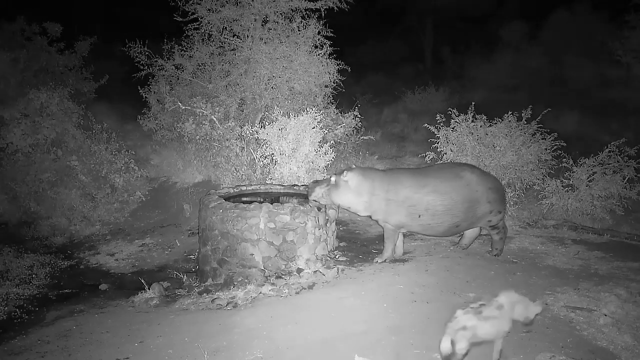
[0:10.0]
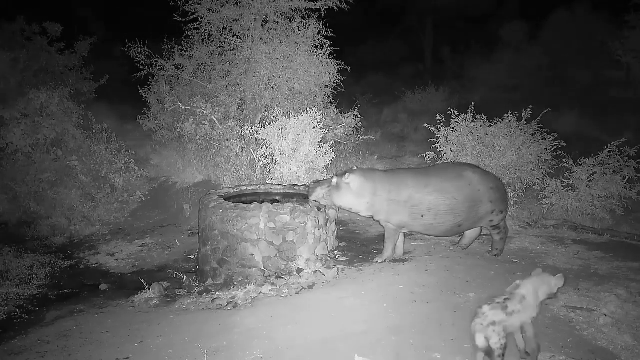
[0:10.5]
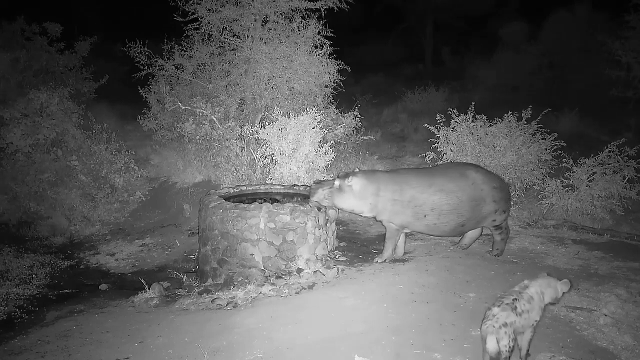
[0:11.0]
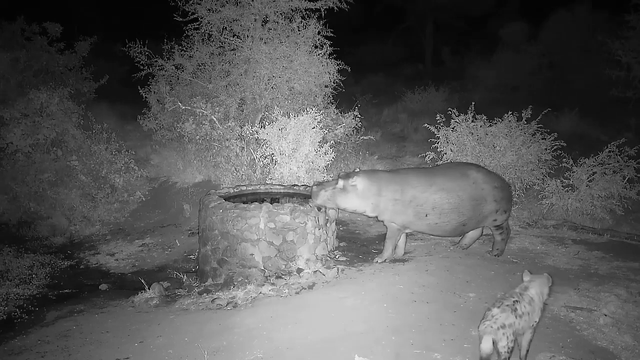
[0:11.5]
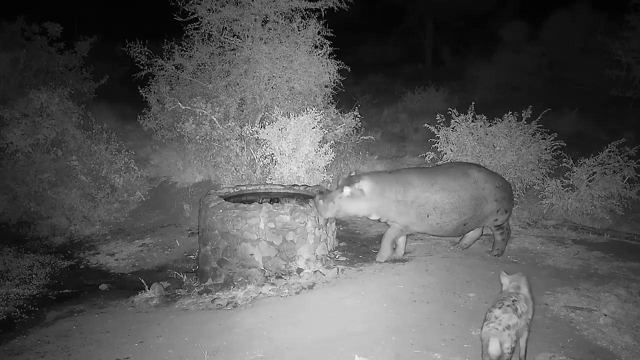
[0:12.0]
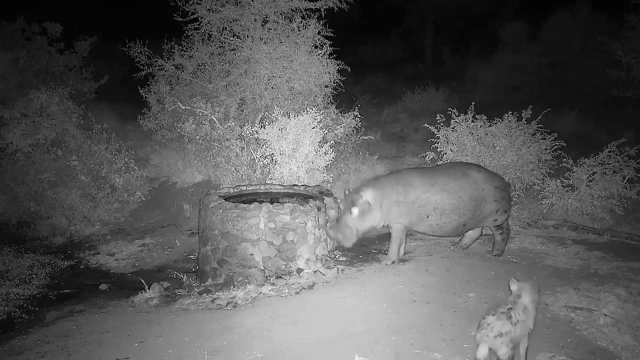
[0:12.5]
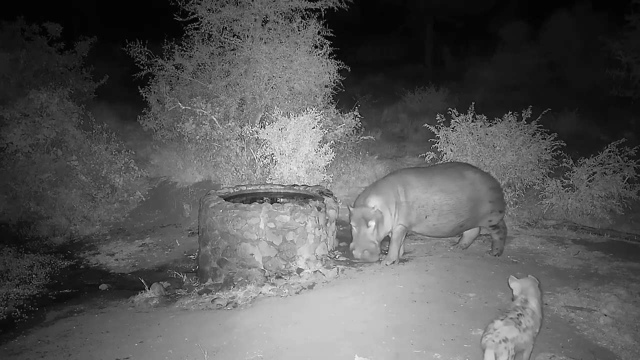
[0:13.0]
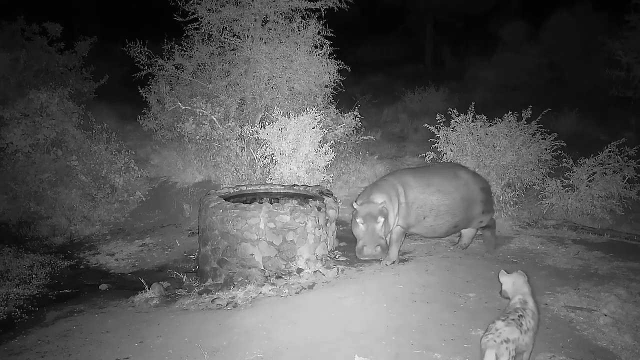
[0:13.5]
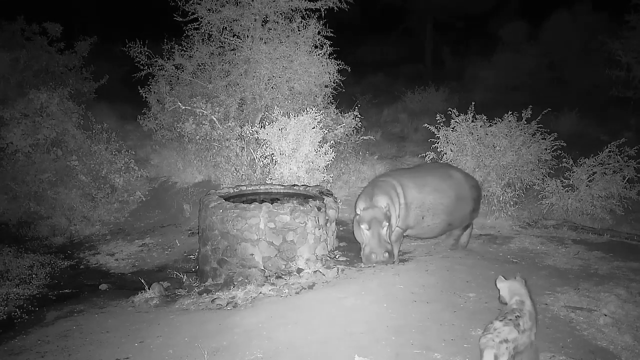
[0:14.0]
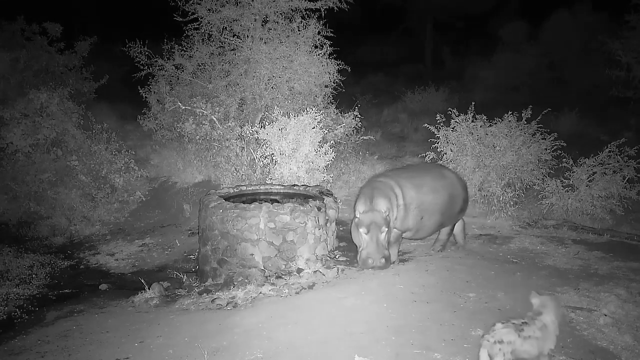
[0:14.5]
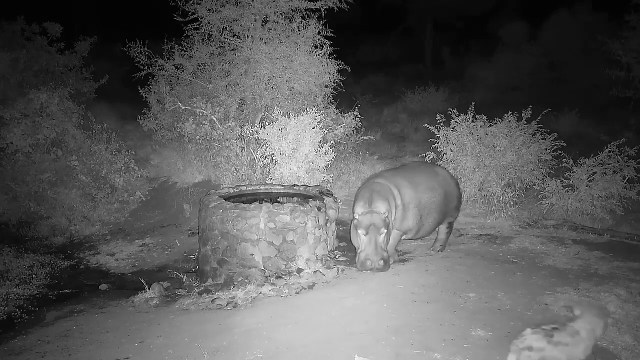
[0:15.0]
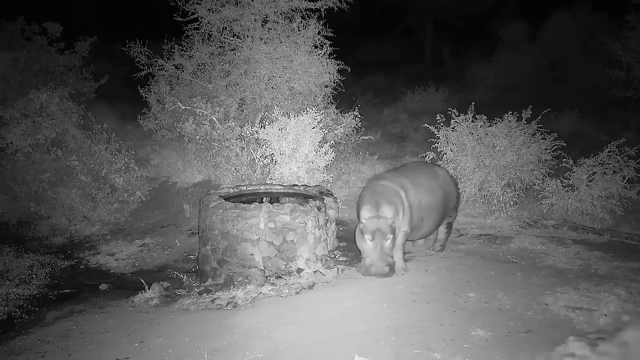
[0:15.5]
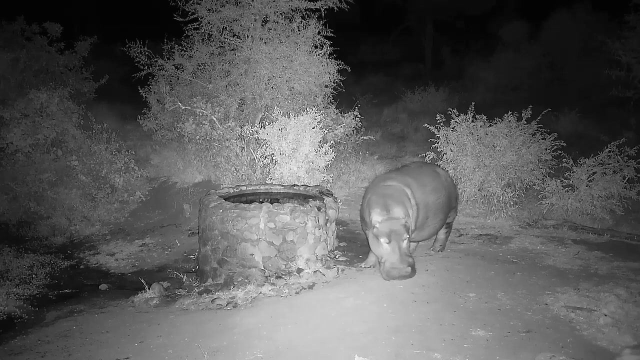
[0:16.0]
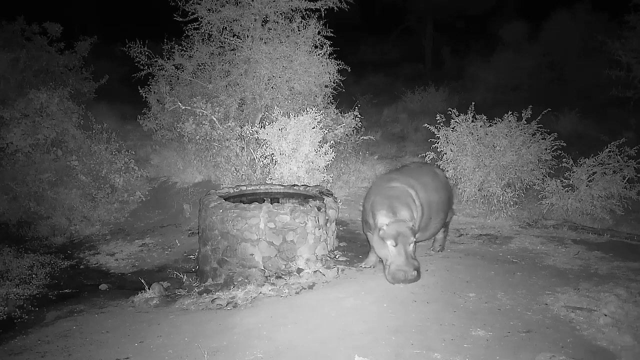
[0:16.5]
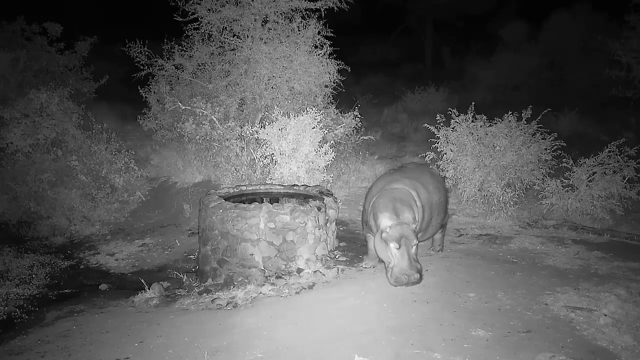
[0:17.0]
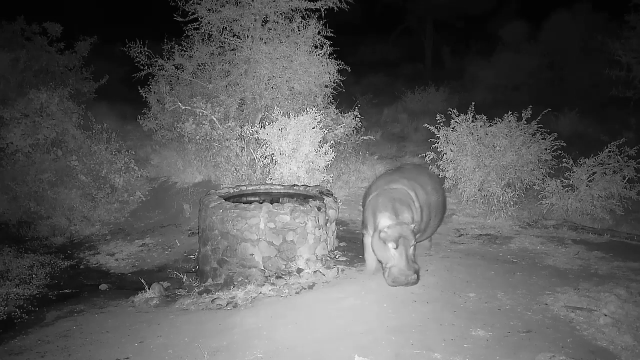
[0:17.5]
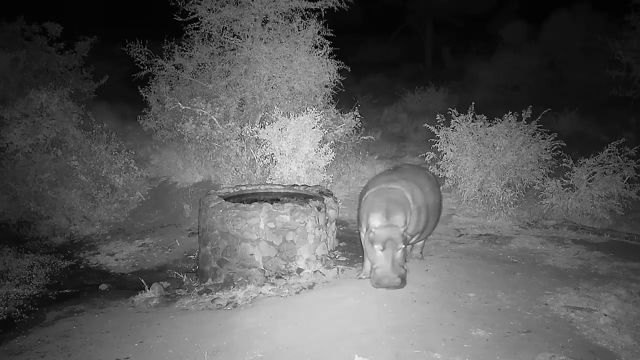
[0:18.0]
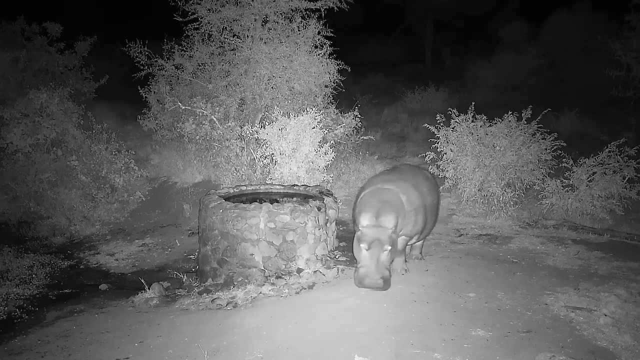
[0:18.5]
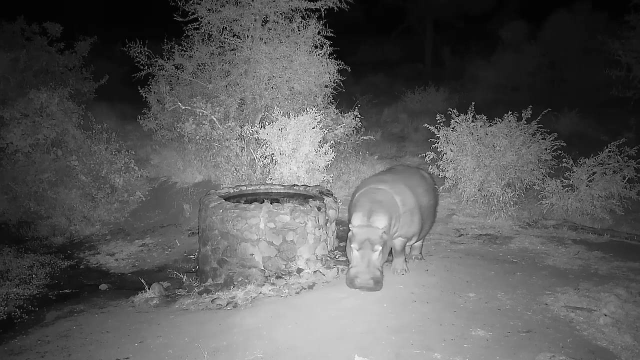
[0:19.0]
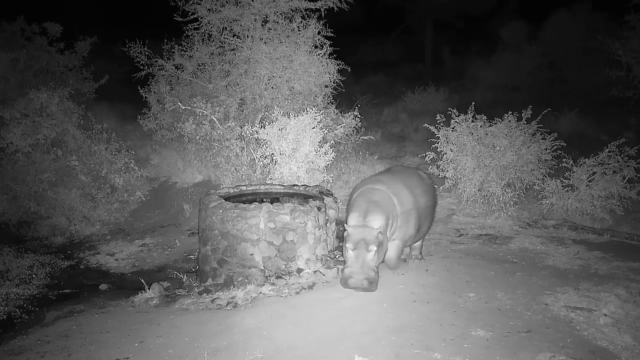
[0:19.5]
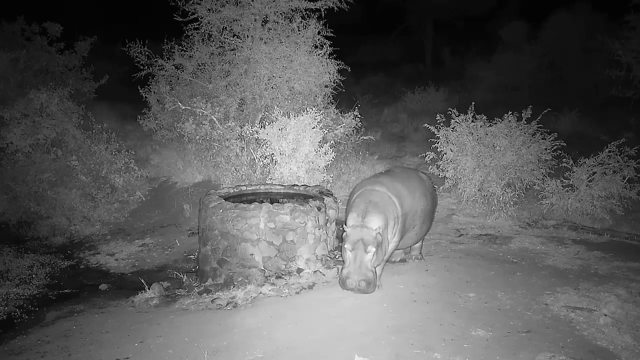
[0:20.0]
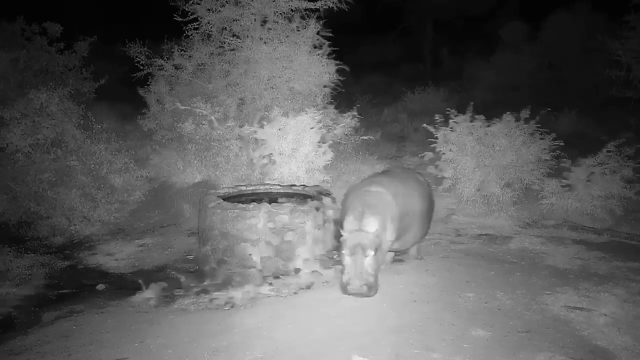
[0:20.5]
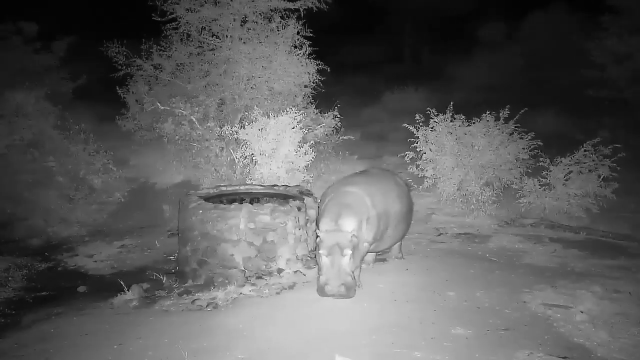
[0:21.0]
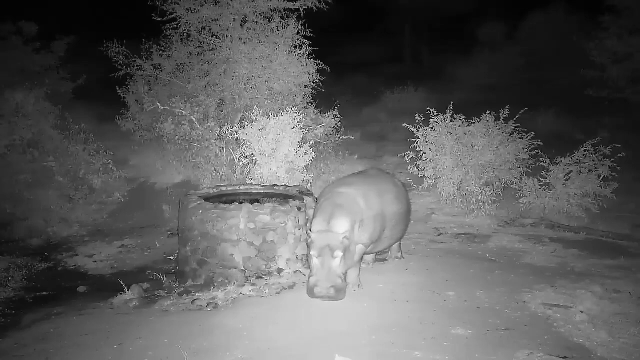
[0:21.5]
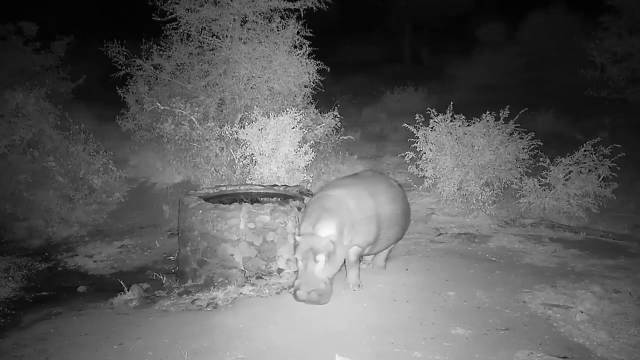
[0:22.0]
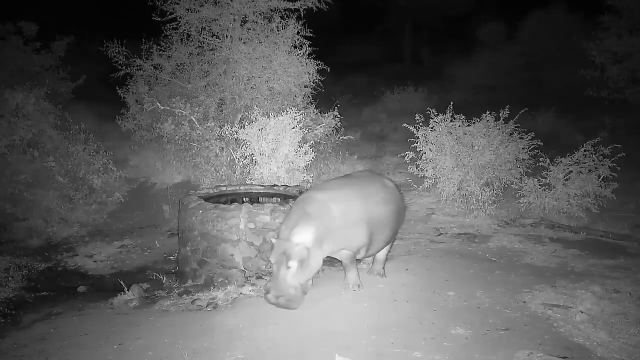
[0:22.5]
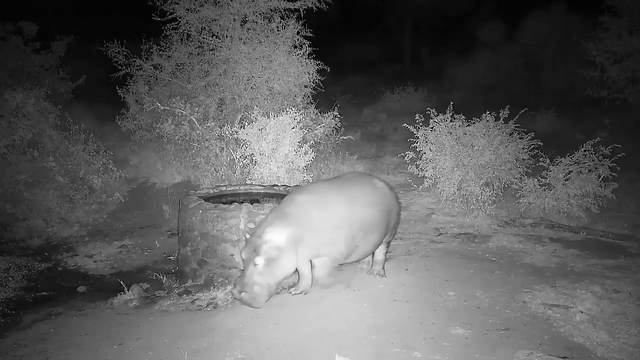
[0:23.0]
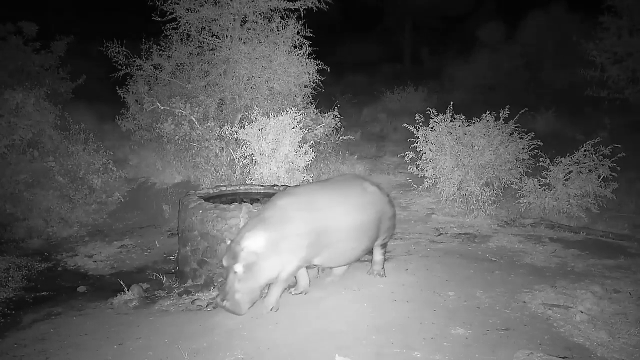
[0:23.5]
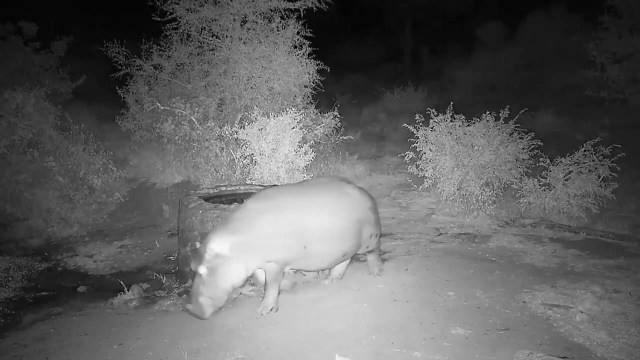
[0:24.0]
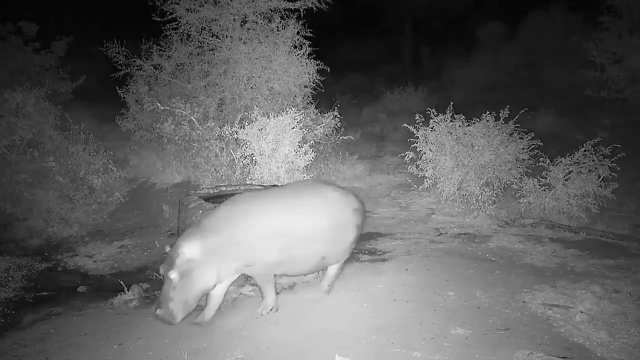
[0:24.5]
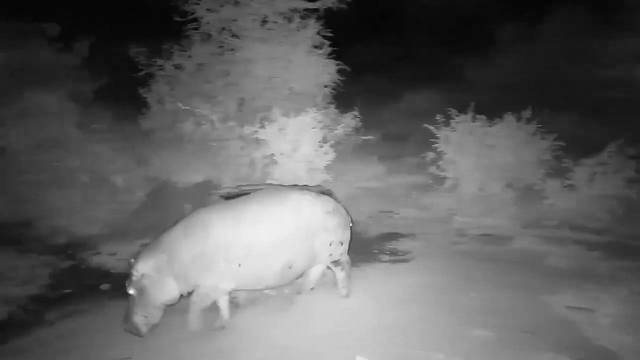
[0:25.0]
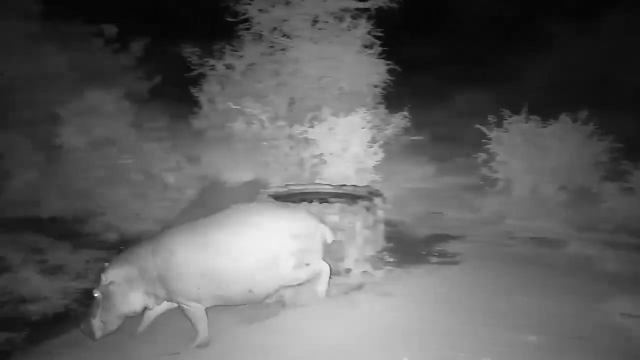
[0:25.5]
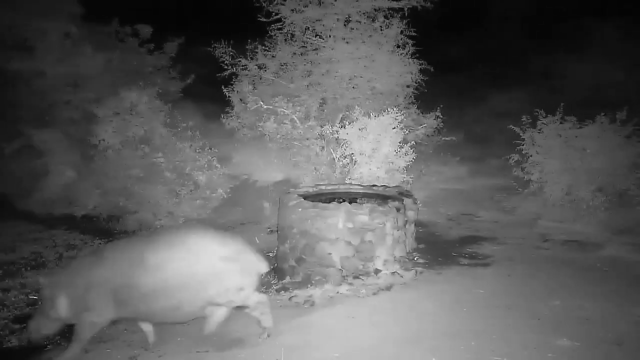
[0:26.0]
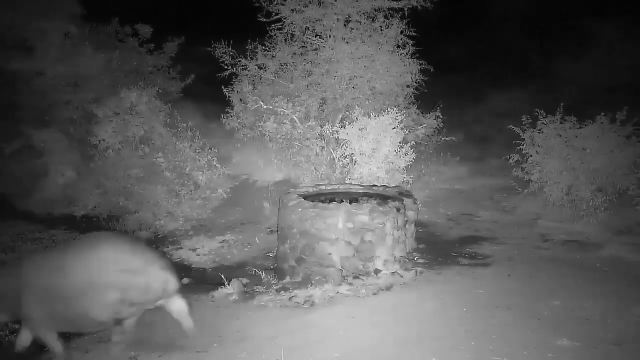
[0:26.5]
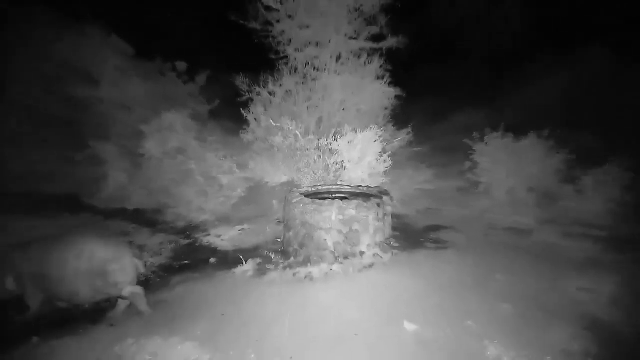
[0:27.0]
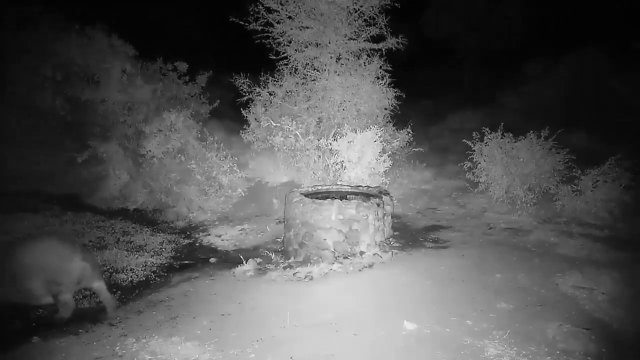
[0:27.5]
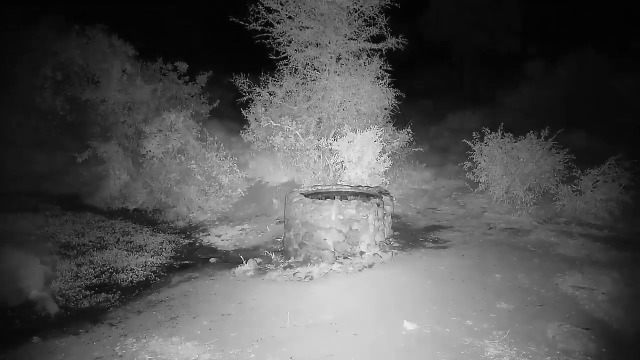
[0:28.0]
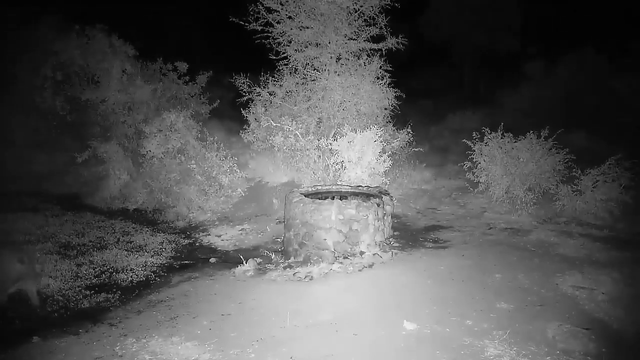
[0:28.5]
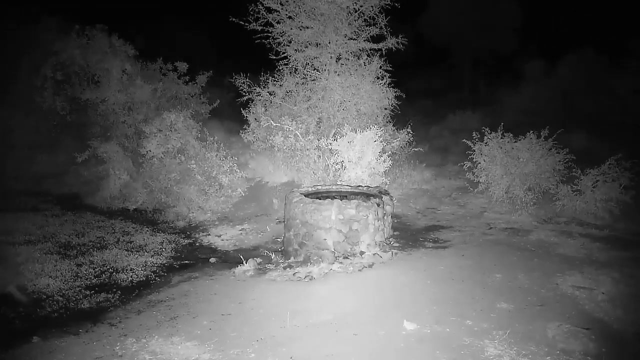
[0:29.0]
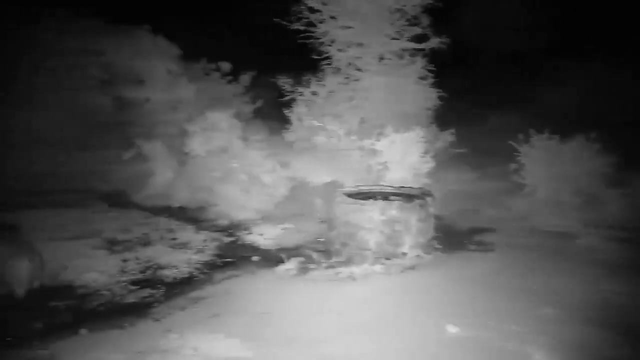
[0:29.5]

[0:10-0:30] The black-and-white footage shows many trees, though their colors cannot be seen. A light is visible, and it seems to be night. There is a small tank with water inside that the animals use for drinking, and a hippo is drinking from it. Another animal is present that seems to be a small cheetah, though it is not easy to identify. The hippo starts to move, the cheetah runs away, and the hippo also runs off toward the forest. The light seems to keep following the hippo and keeps coming closer.